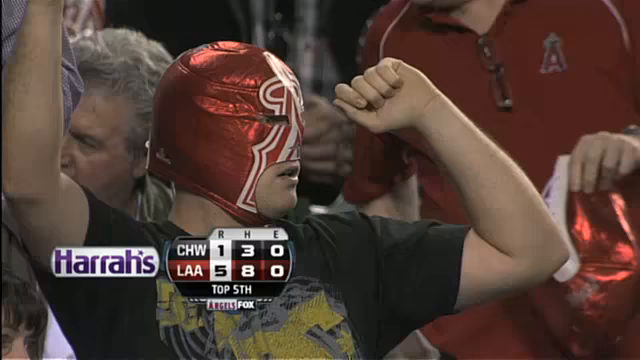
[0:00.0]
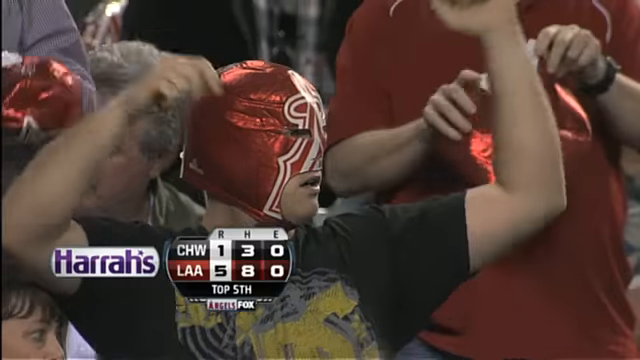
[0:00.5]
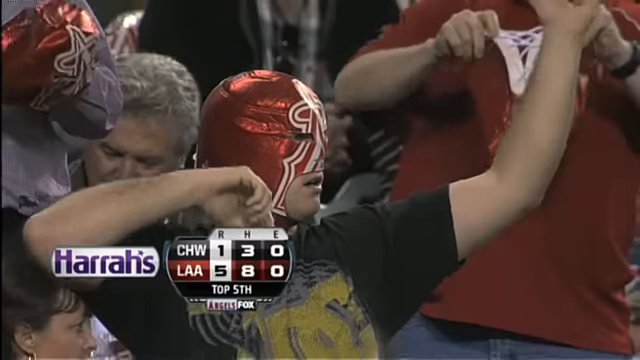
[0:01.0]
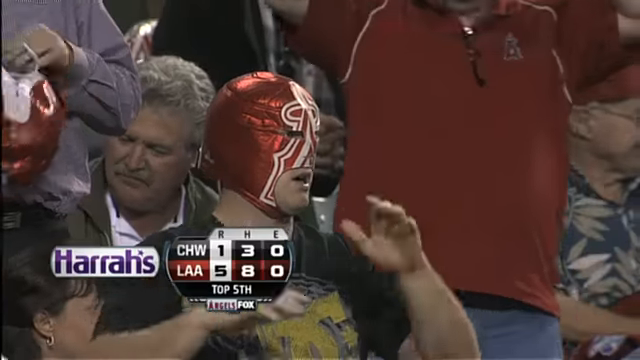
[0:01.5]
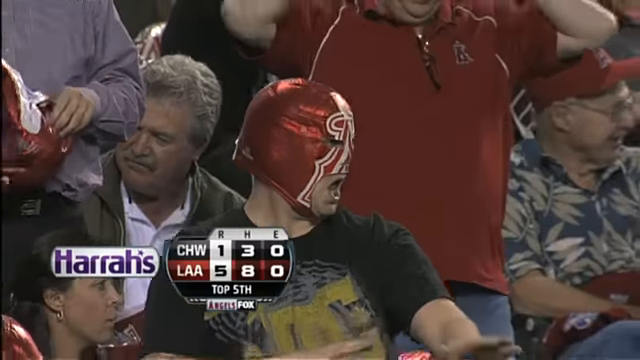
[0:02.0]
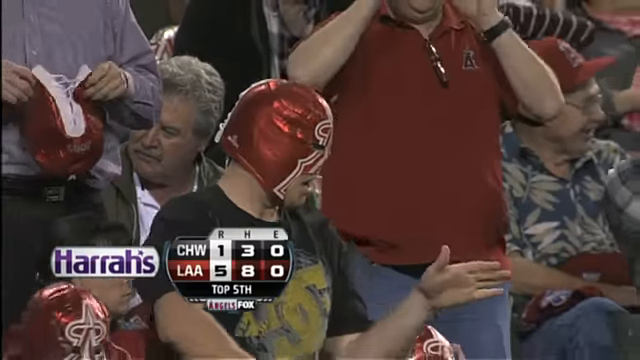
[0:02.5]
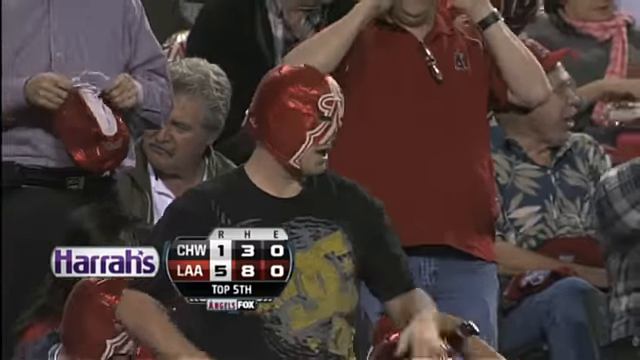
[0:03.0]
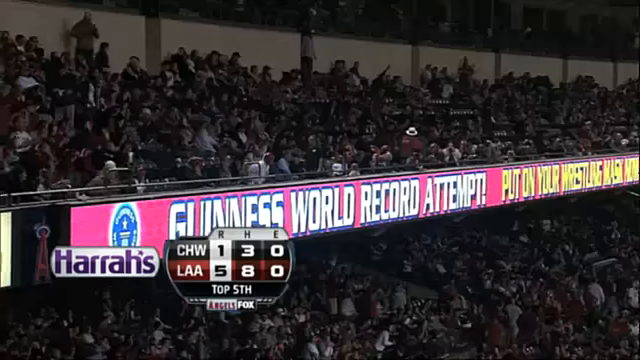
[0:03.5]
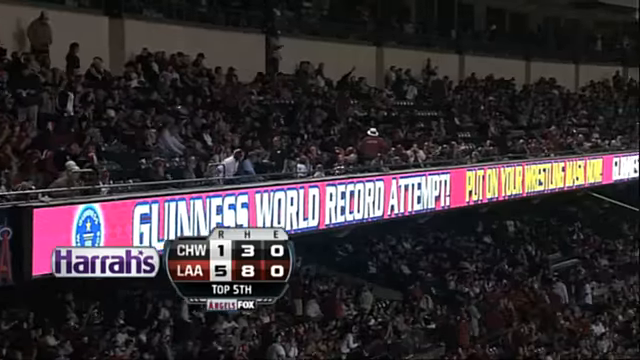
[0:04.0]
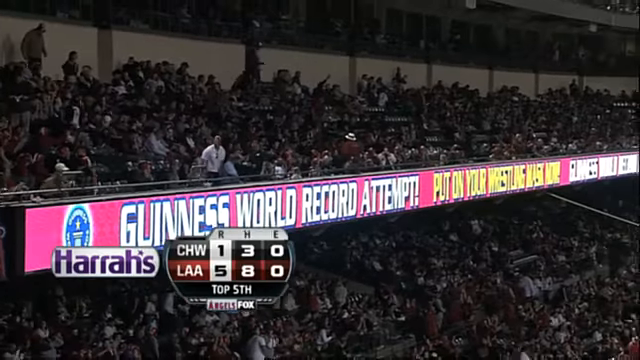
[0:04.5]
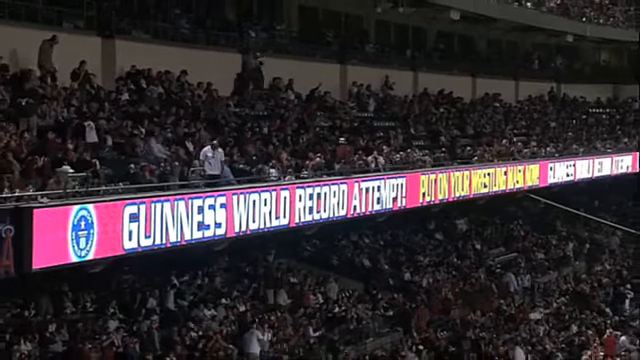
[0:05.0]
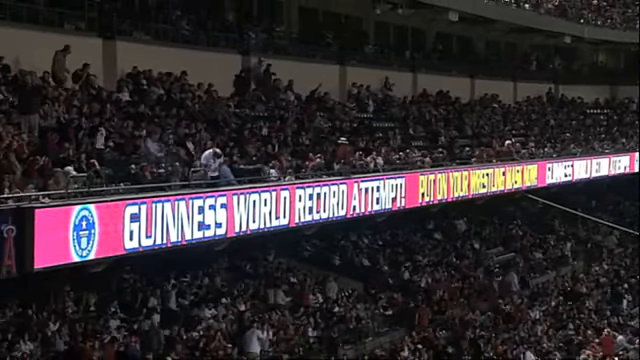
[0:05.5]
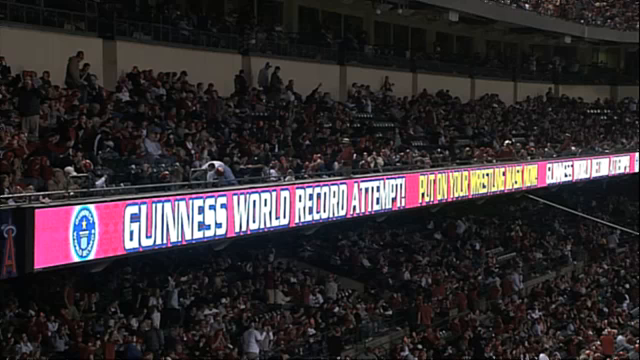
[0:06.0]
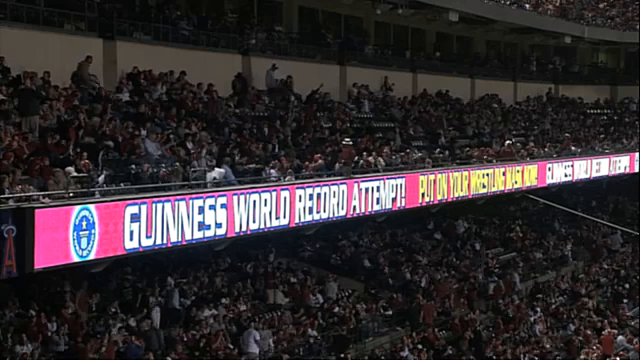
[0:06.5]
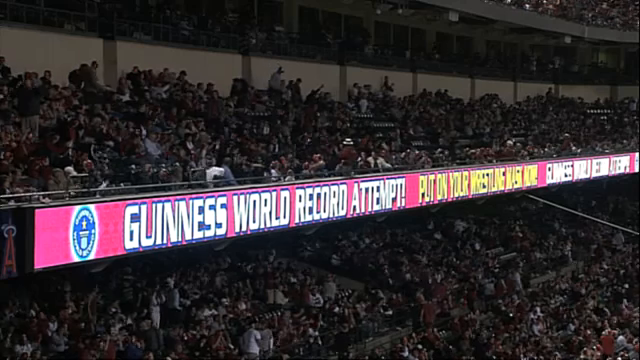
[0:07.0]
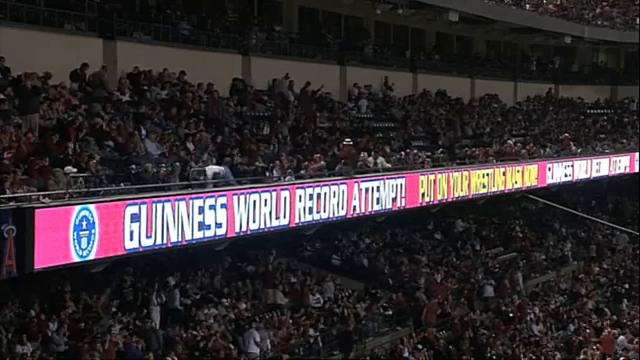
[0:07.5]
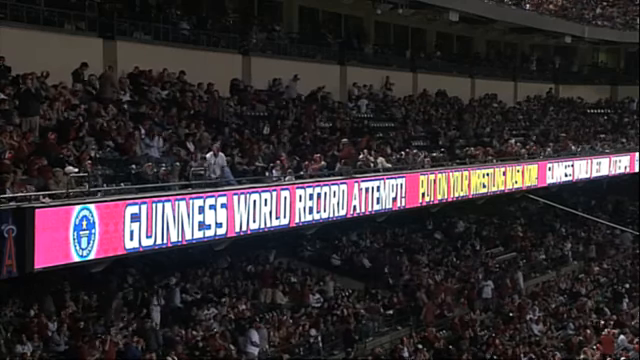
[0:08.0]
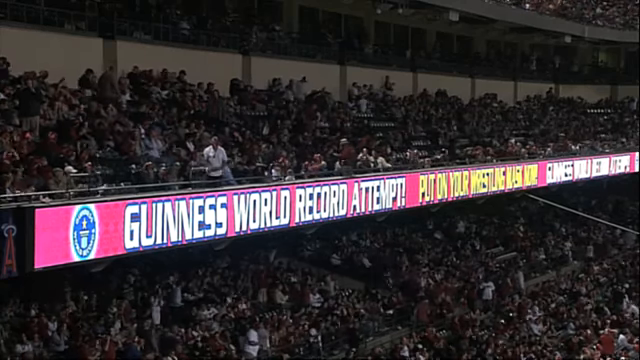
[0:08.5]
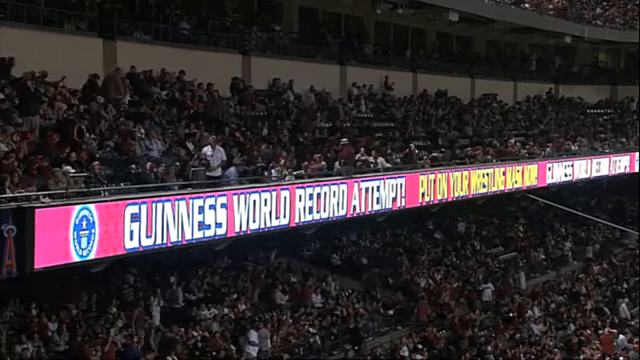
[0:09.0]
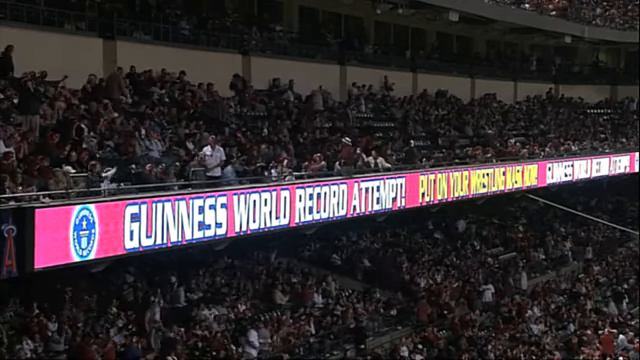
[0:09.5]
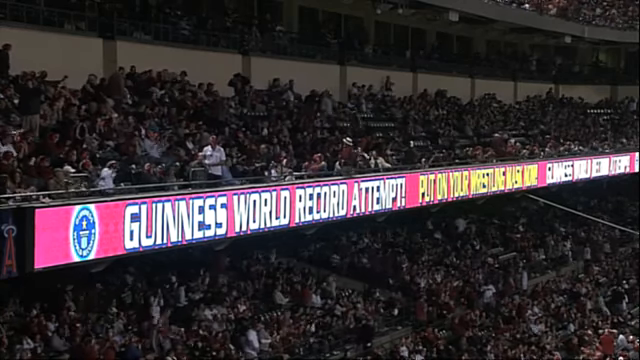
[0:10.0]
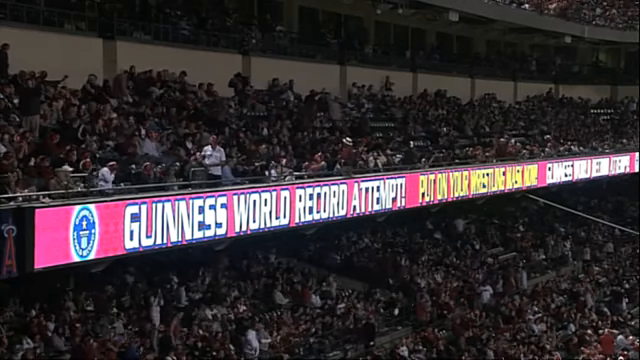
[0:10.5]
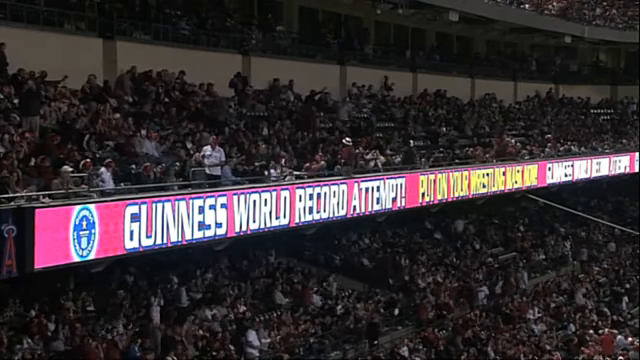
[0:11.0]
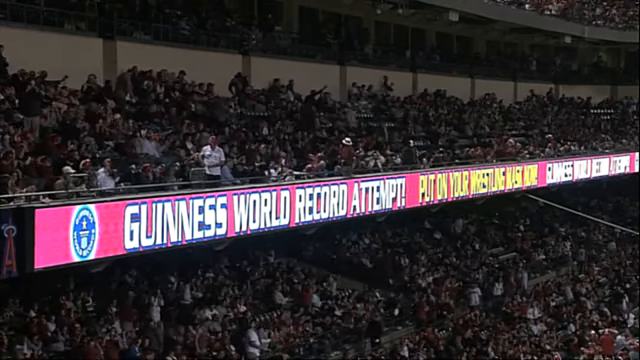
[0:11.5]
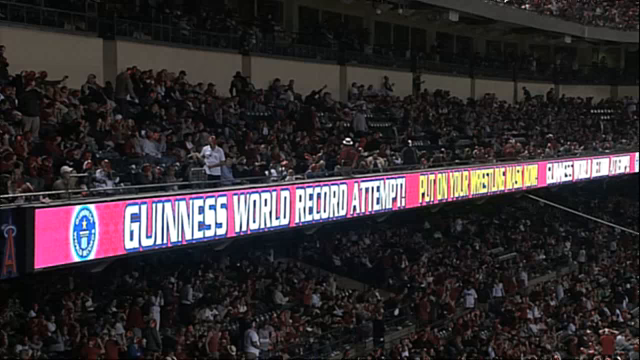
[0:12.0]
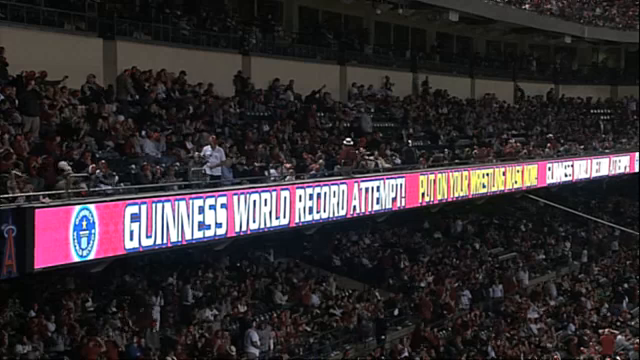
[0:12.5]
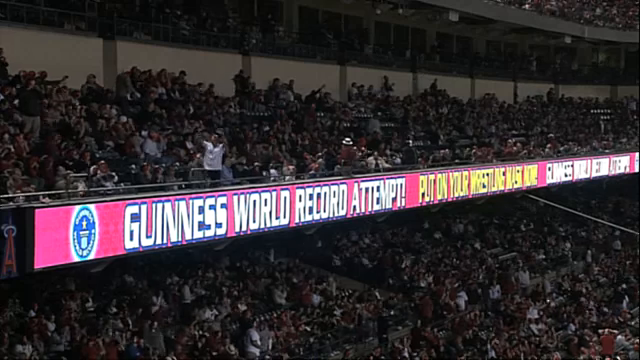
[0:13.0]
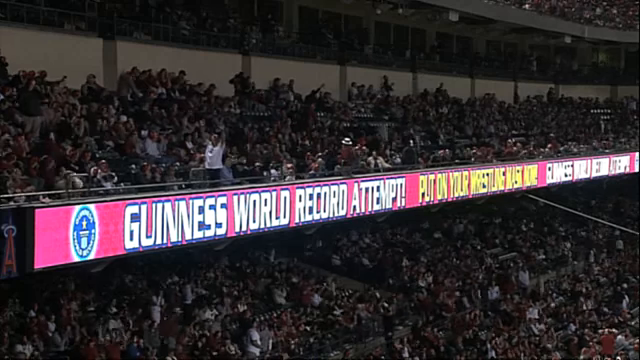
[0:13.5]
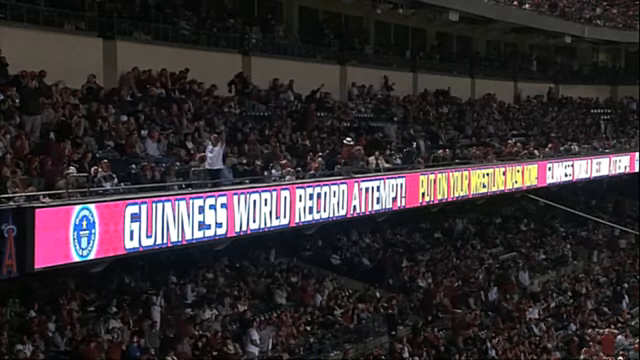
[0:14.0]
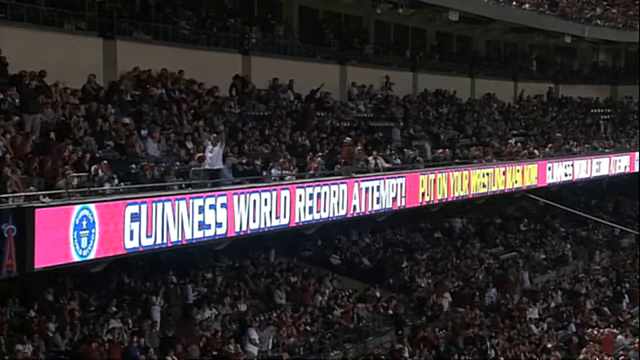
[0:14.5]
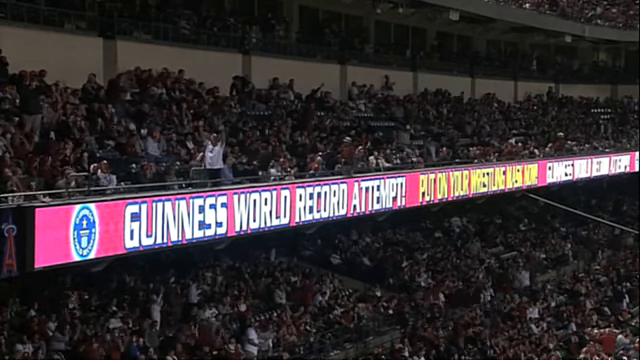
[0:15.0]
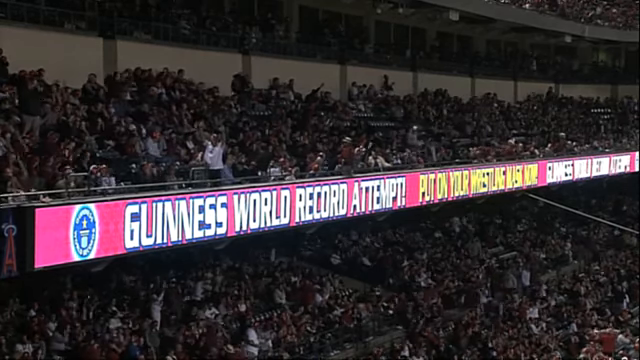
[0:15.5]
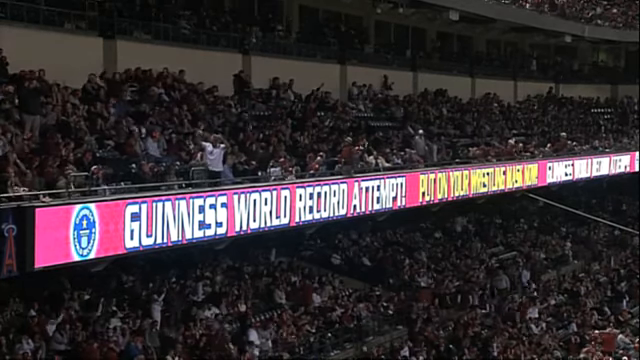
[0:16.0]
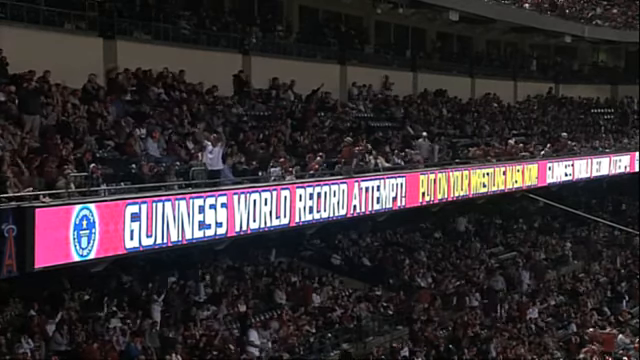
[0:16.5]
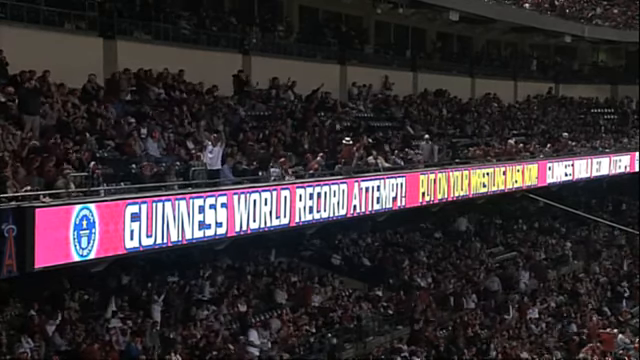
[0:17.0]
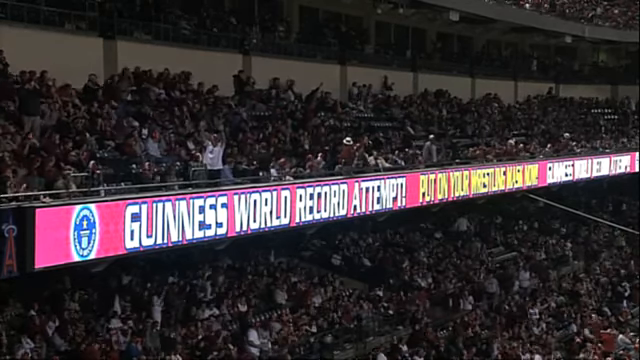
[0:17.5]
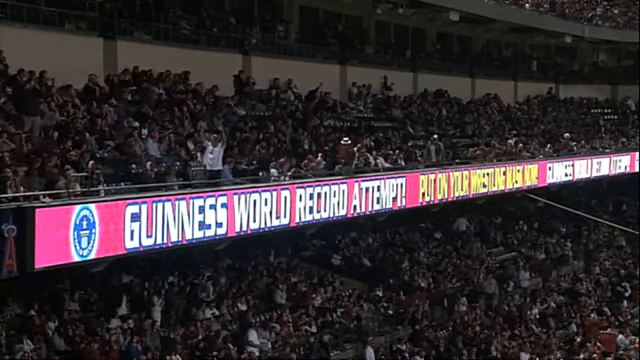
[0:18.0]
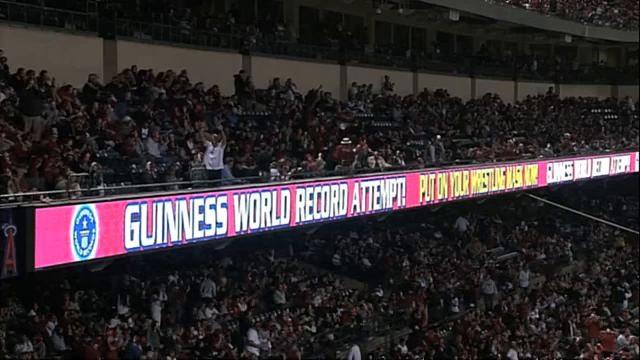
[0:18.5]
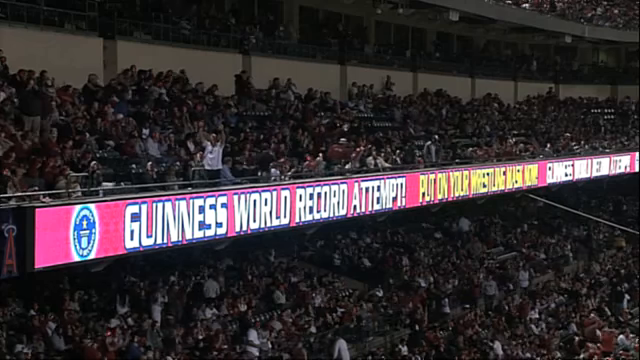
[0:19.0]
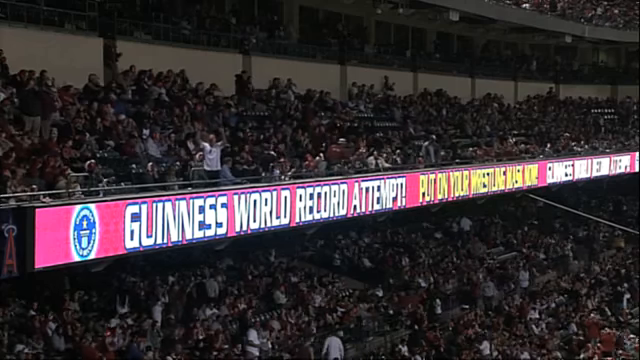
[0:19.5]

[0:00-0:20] Fans are at a baseball game between the Los Angeles Angels and the Chicago White Sox. The focus is on one man in a black t-shirt wearing a red mask, much like a wrestling mask, with the Angels logo on it. He is dancing, and the other people around him don't seem to be paying much attention to him. The scene then shifts to a view of the crowd in the upper tier, and right below the crowd is an illuminated sign that reads "Guinness World Record attempt." A score is shown at the bottom of the screen, with a Haraz logo to the left of the game score. The score is five to one in favor of the Angels.